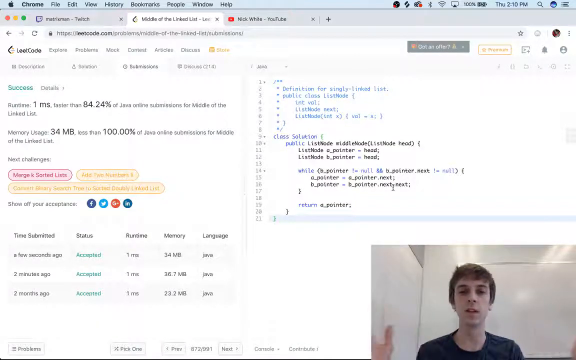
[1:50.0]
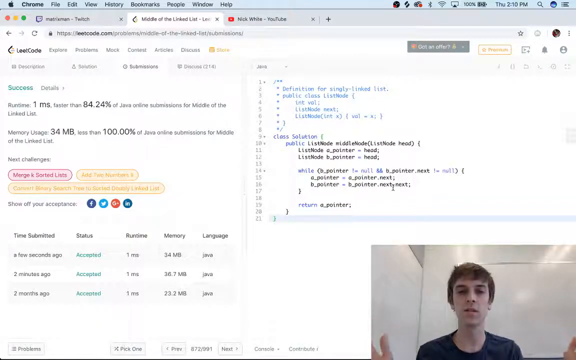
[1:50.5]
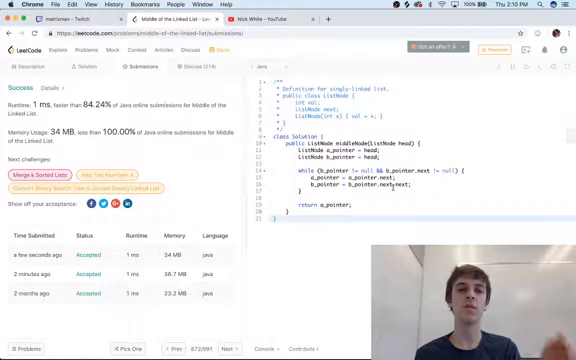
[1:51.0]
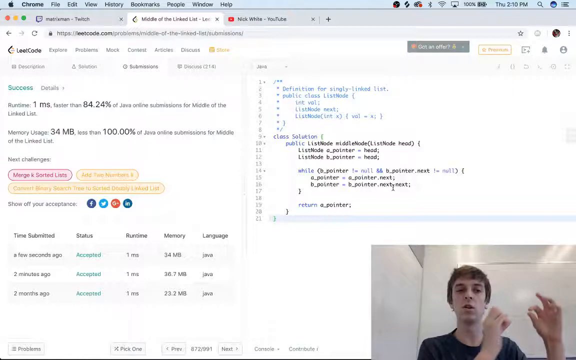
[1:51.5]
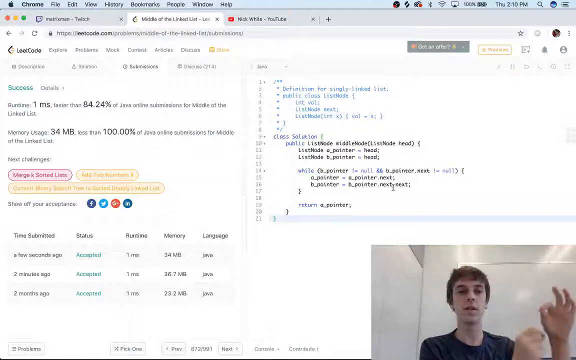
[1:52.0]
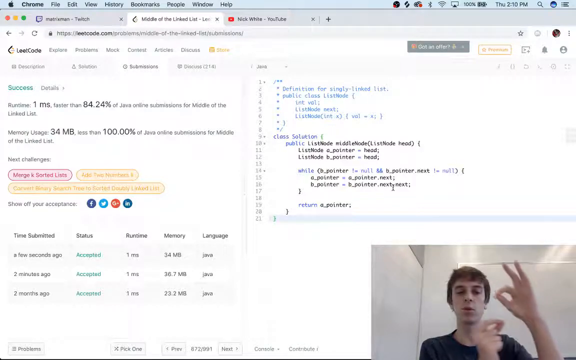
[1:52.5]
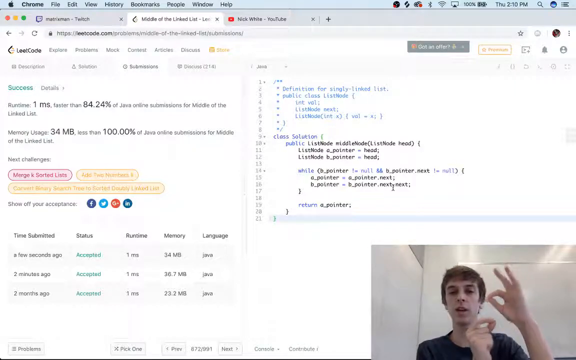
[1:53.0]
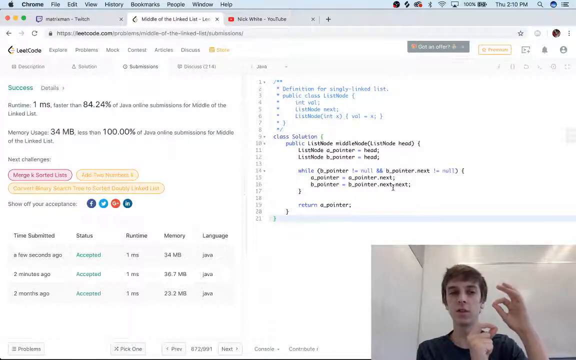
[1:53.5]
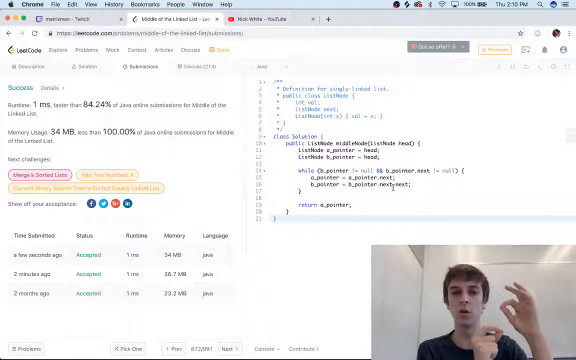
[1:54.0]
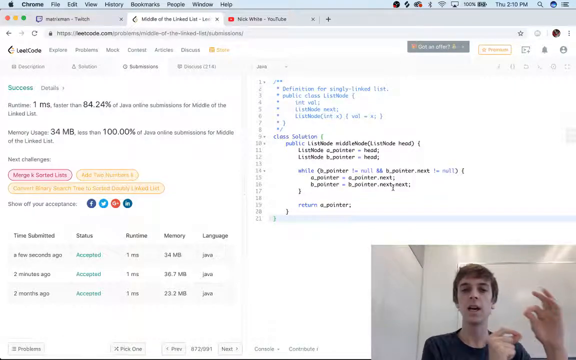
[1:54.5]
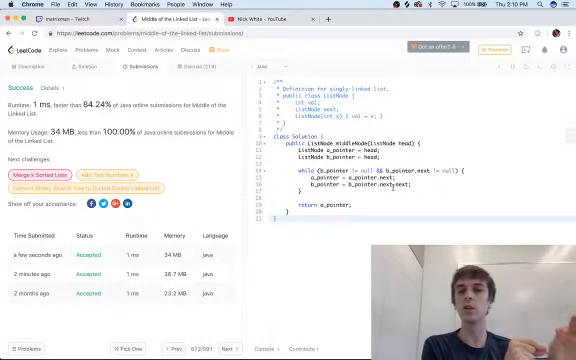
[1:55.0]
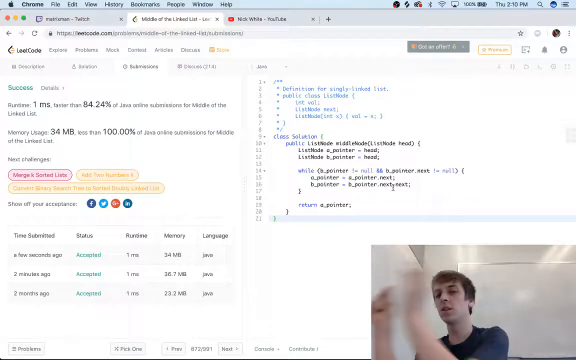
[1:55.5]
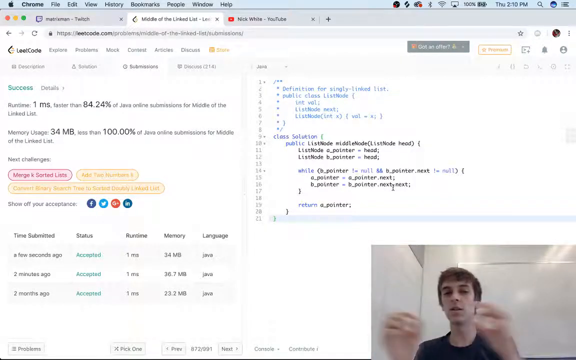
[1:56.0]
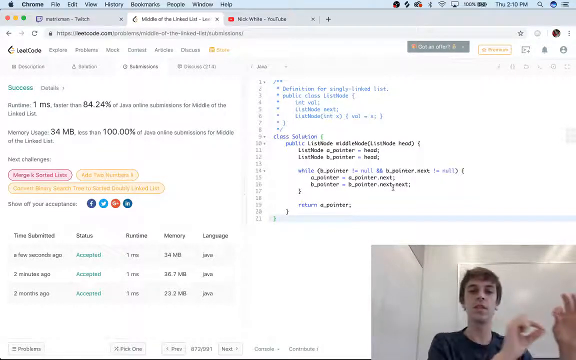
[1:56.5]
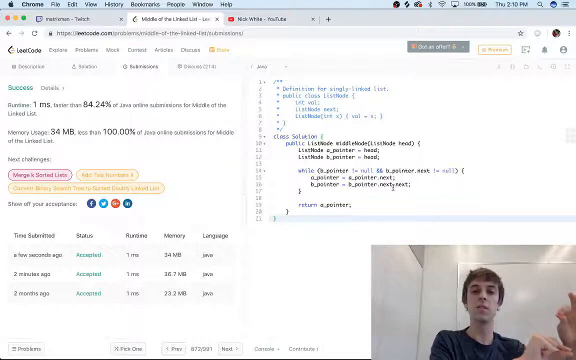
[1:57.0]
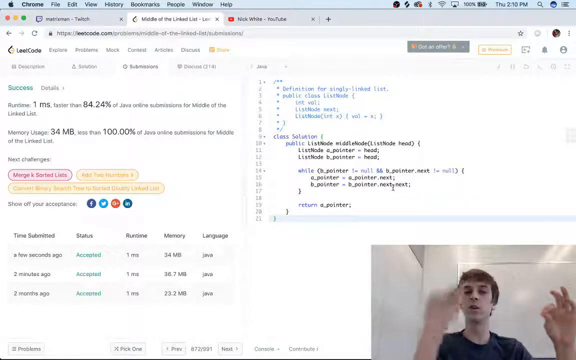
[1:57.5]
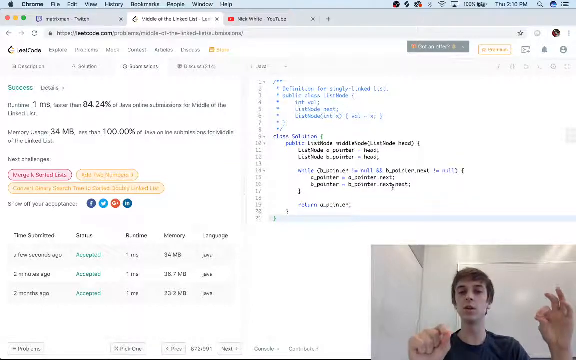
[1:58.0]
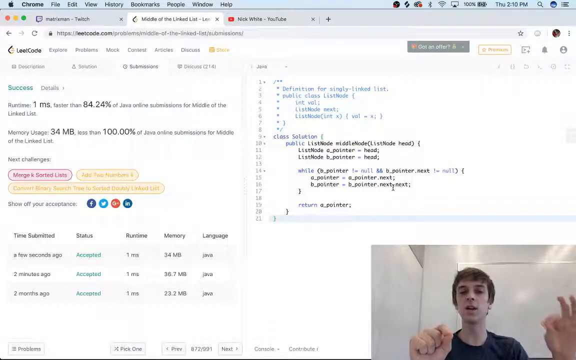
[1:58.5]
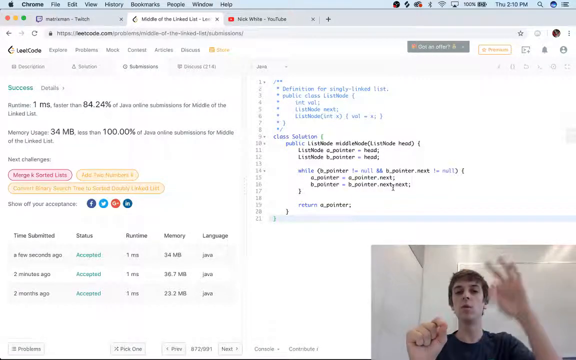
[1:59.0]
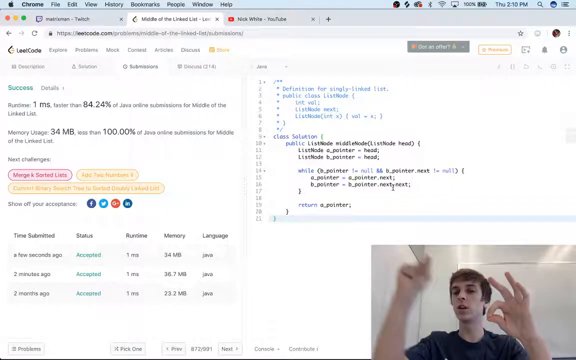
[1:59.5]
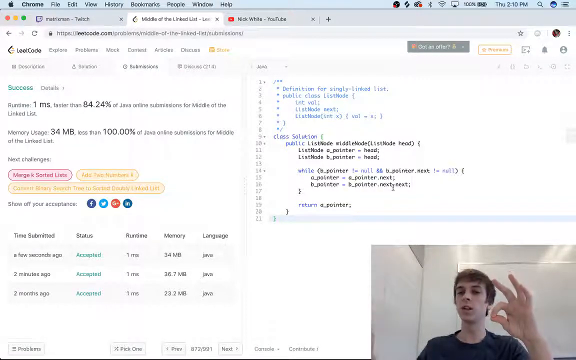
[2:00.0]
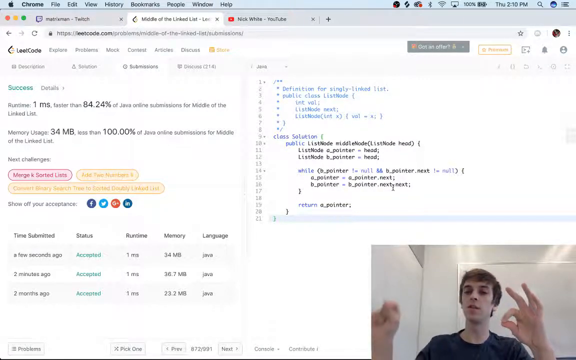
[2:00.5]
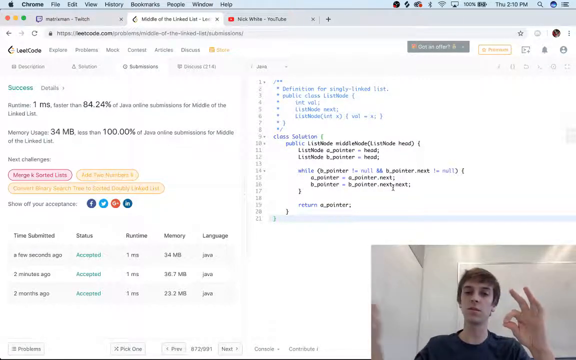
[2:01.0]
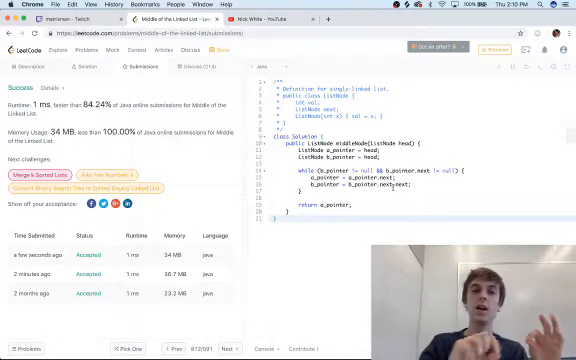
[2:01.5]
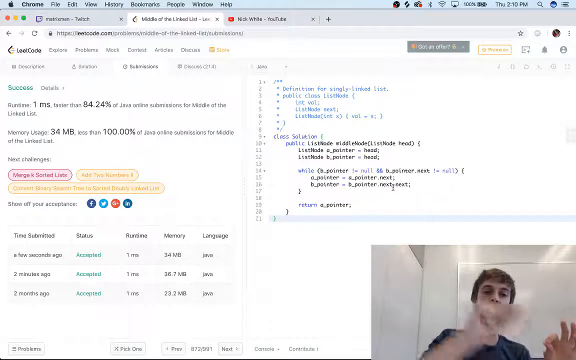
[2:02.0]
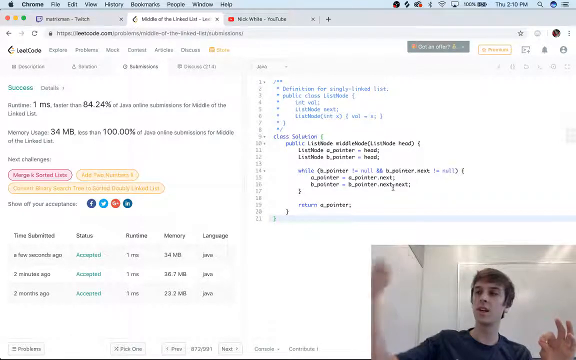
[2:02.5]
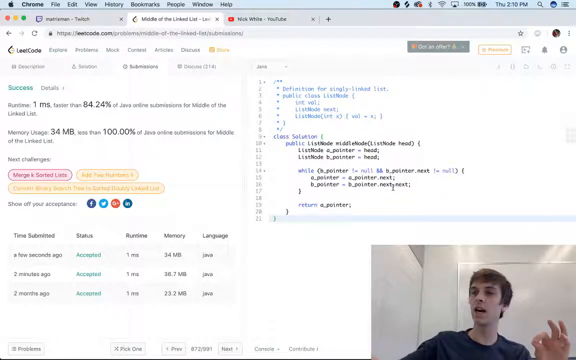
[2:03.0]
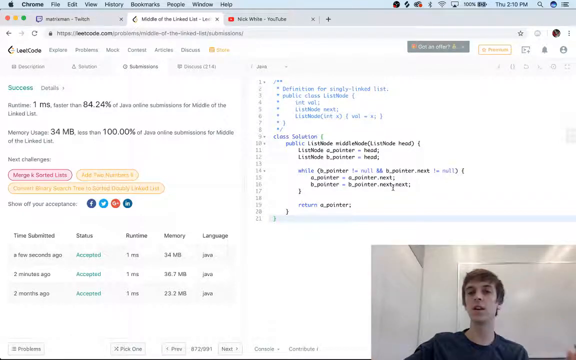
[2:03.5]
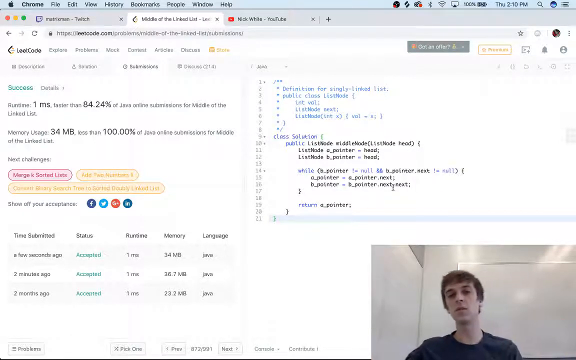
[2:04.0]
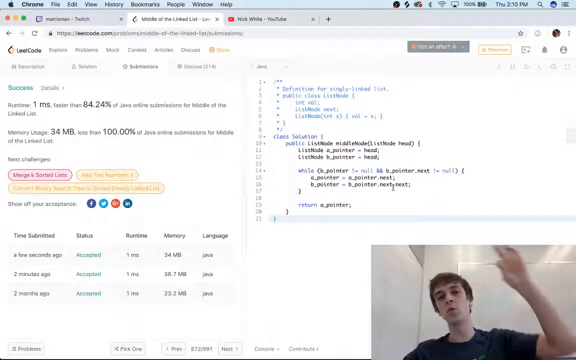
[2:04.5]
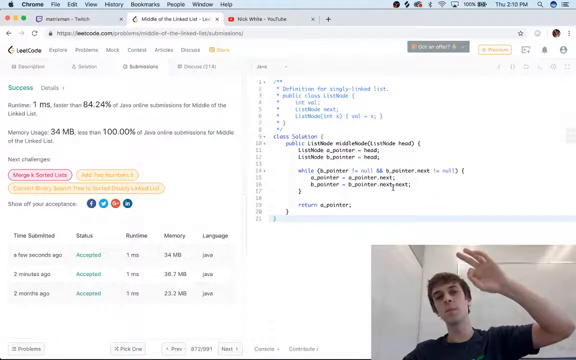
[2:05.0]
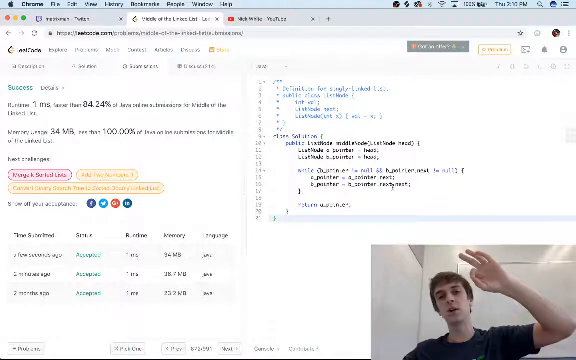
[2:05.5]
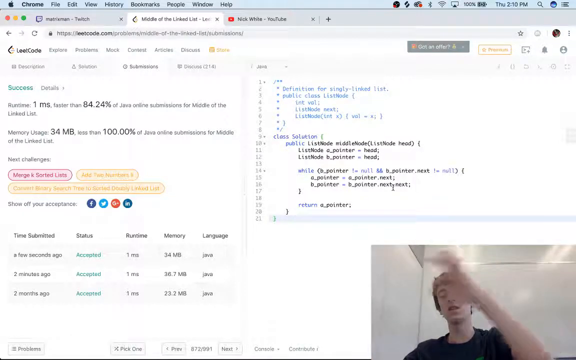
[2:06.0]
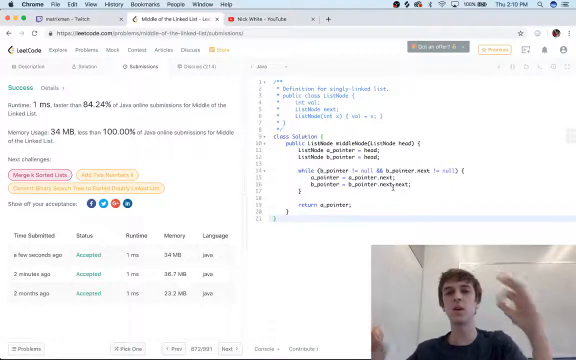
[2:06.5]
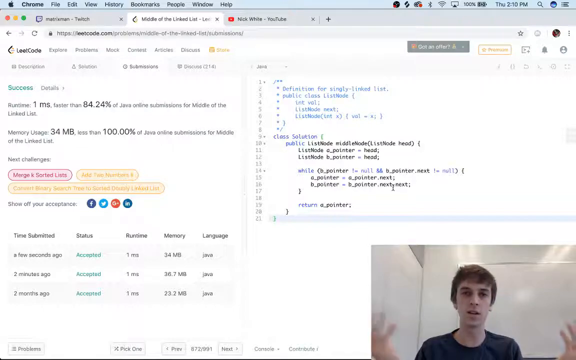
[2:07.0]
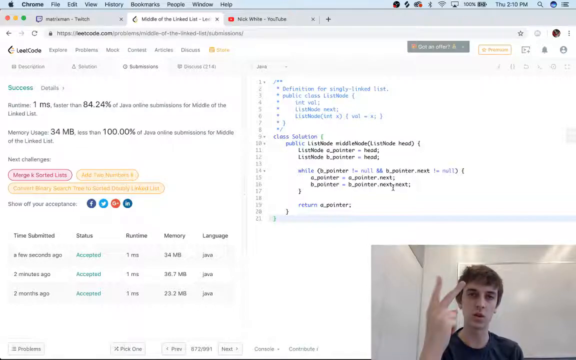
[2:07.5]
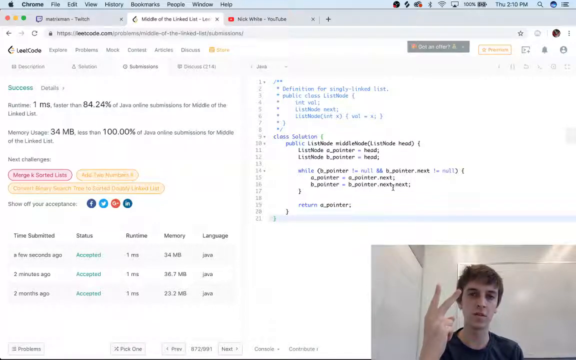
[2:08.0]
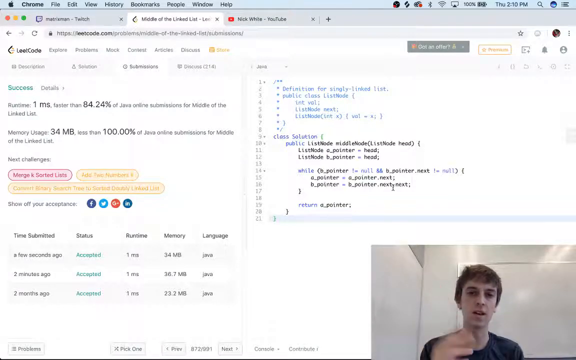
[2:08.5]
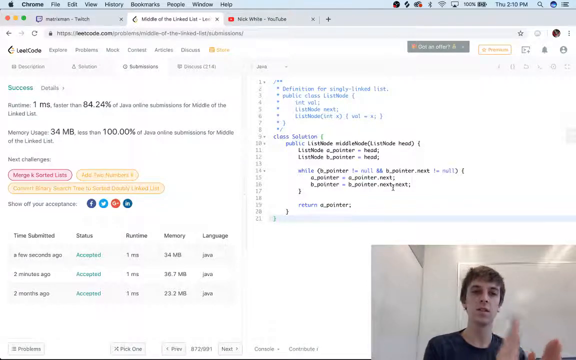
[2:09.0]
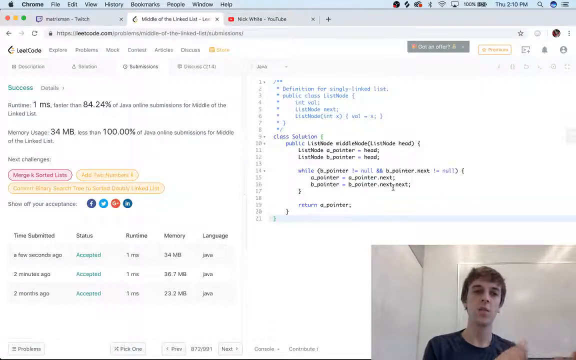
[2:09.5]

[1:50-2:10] The speaker demonstrates an aspect of his work using hand expressions and body language. He pinches his thumb and forefinger together on both hands and draws lines connecting the two, moving from place to place. He moves both hands from the right side of the screen to the left side, then brings them both back. He moves his right hand toward the left side of the screen, then moves his left hand closer, but not exactly to the same point. He then moves his right hand off screen, and his left hand shortly follows in an arch. He raises two fingers up to the camera and continues with his hand motions. A box in the bottom left of the screen reads "time submitted", "status", "runtime", "memory", and "language". Its first entry shows it was submitted a few seconds ago, status accepted, runtime 1ms, memory 34 MB, and language Java.